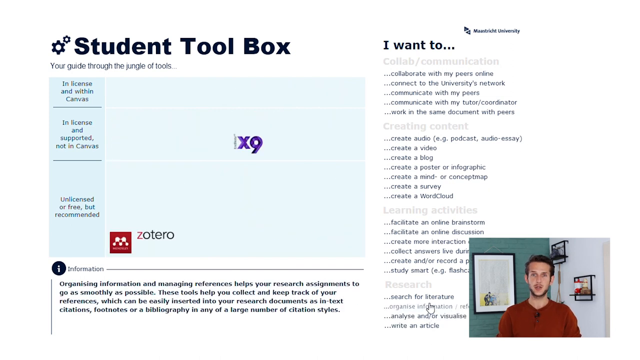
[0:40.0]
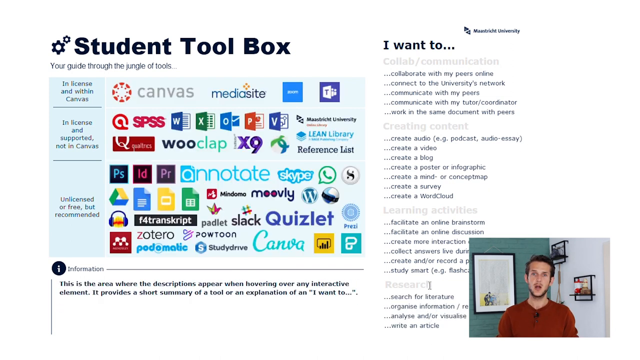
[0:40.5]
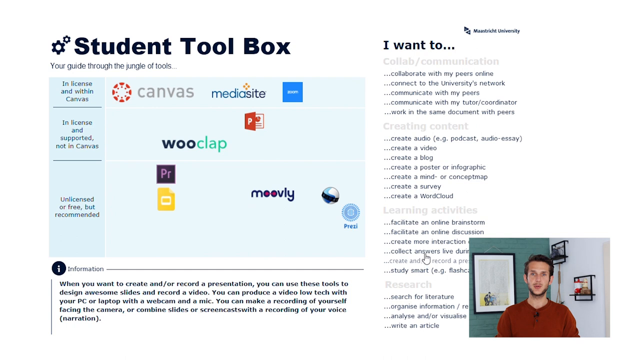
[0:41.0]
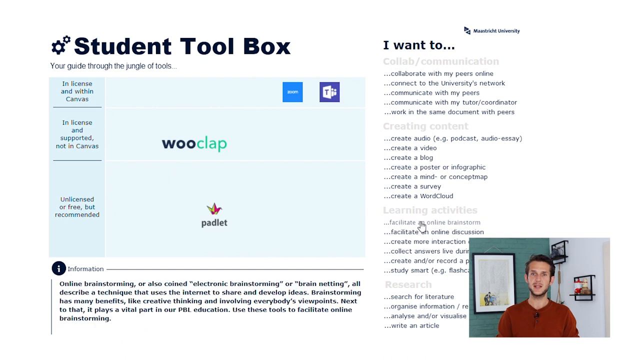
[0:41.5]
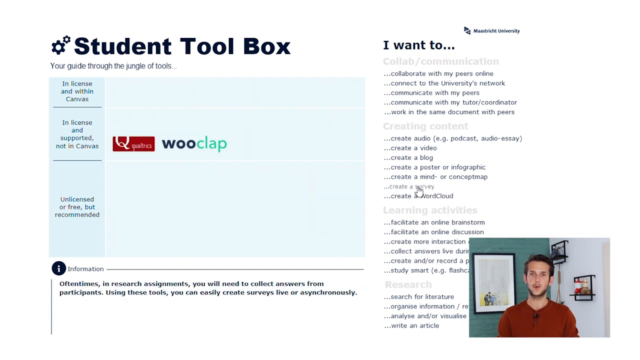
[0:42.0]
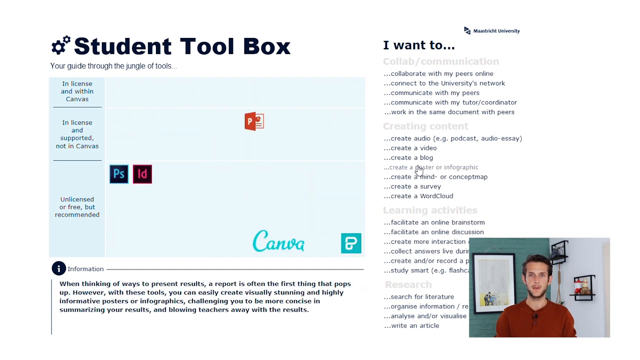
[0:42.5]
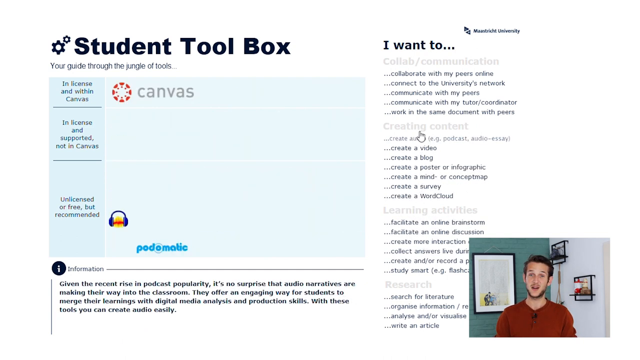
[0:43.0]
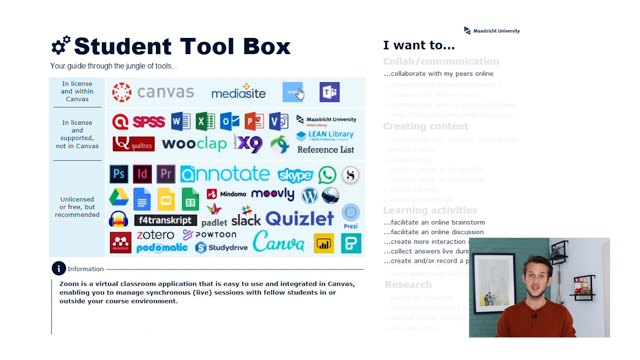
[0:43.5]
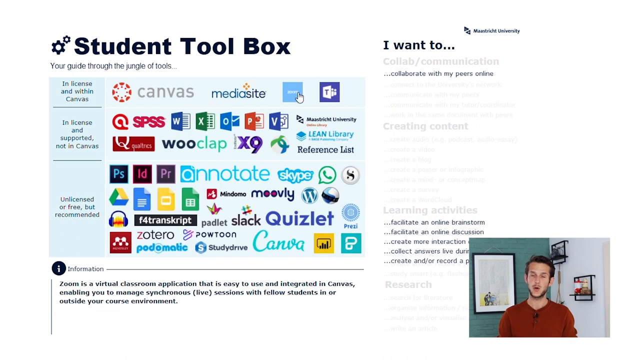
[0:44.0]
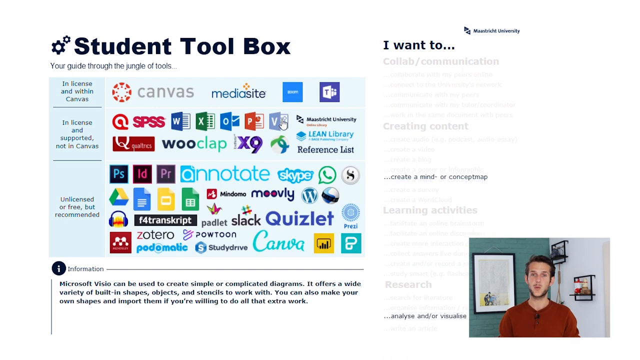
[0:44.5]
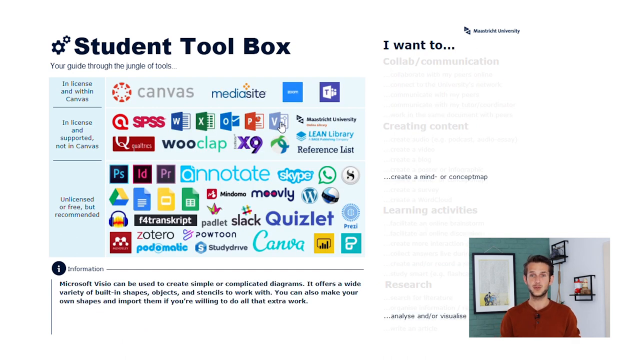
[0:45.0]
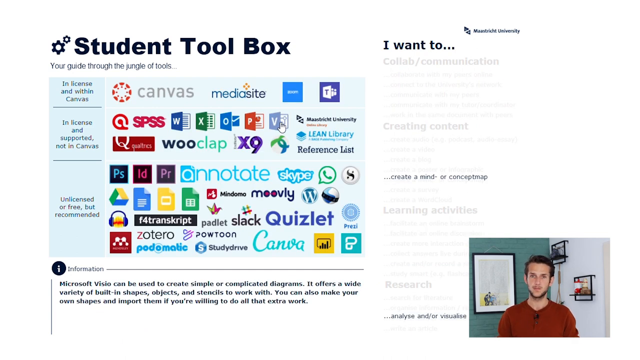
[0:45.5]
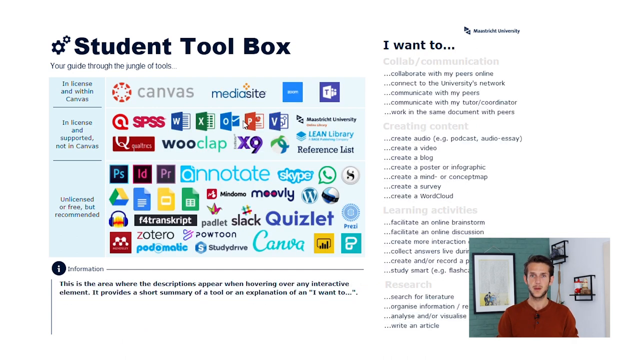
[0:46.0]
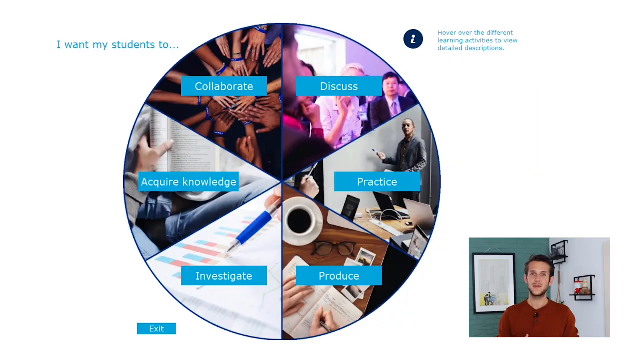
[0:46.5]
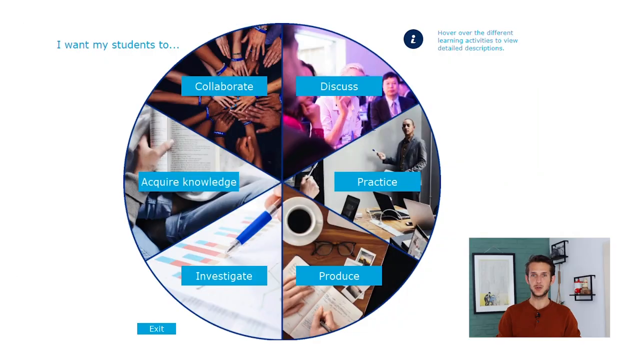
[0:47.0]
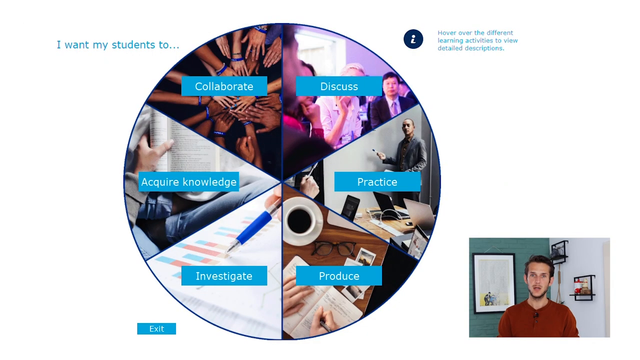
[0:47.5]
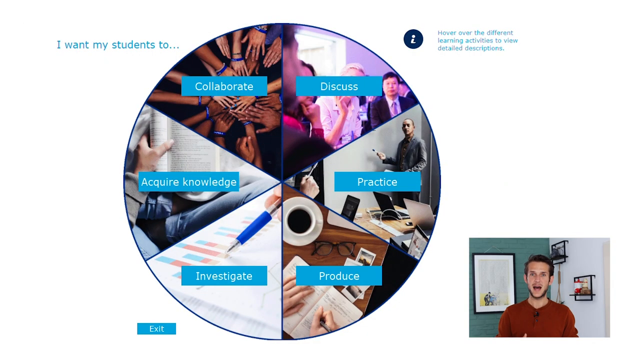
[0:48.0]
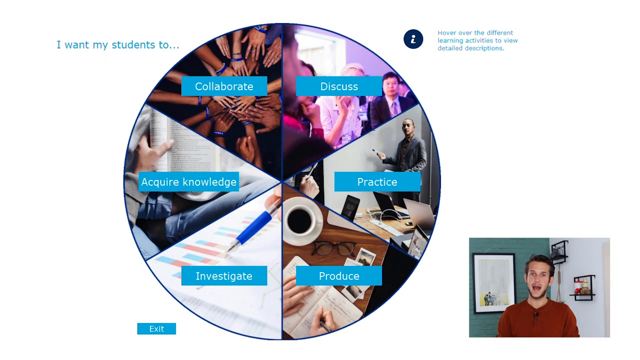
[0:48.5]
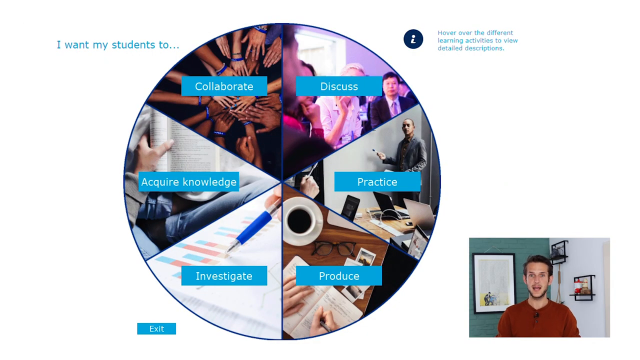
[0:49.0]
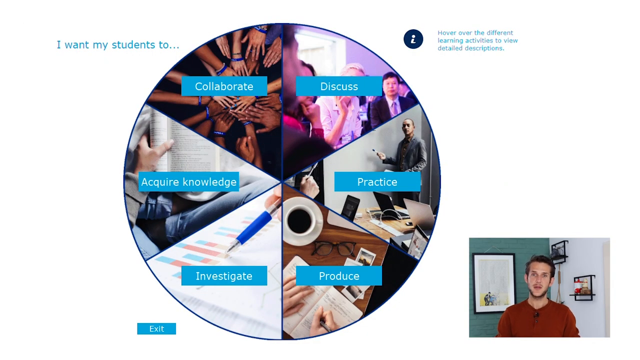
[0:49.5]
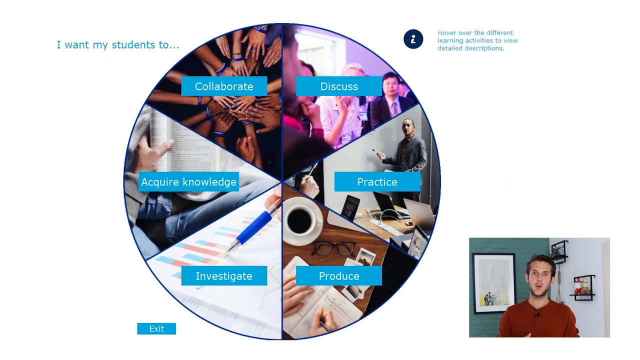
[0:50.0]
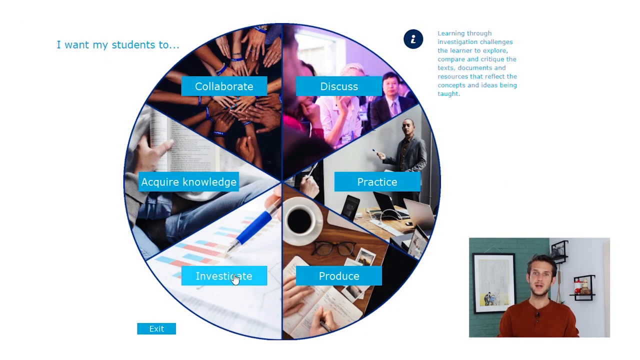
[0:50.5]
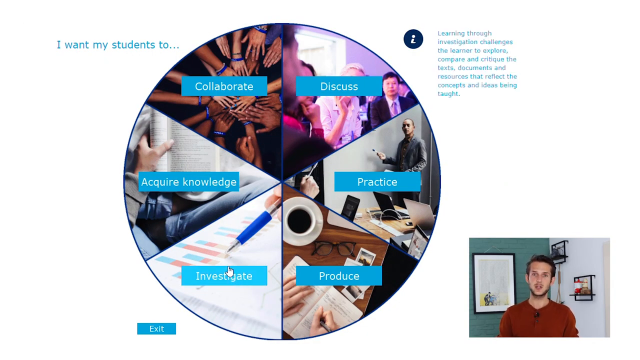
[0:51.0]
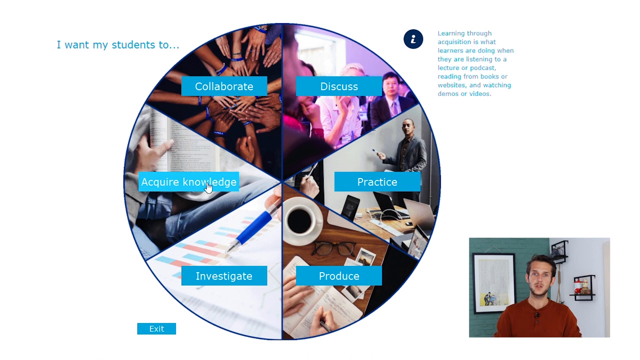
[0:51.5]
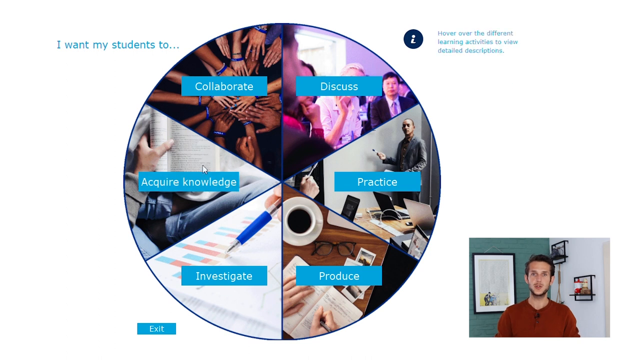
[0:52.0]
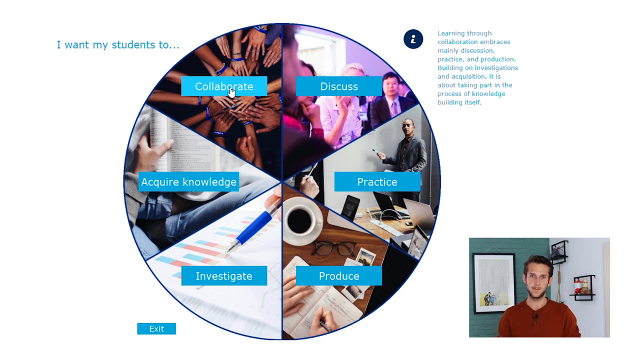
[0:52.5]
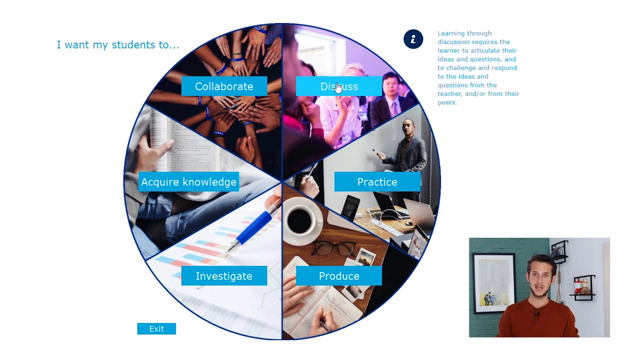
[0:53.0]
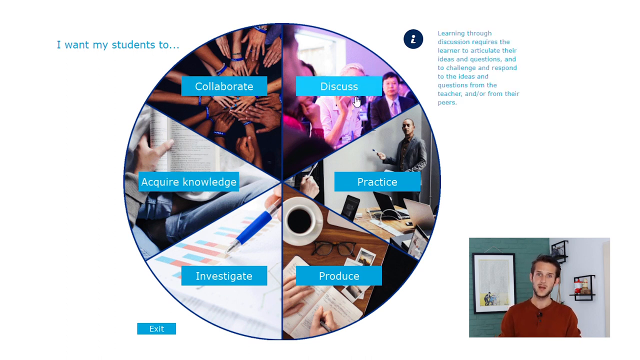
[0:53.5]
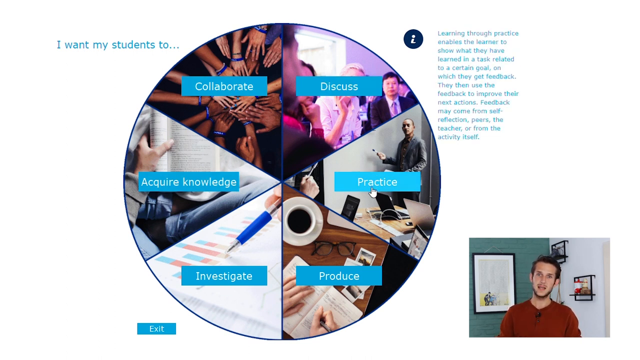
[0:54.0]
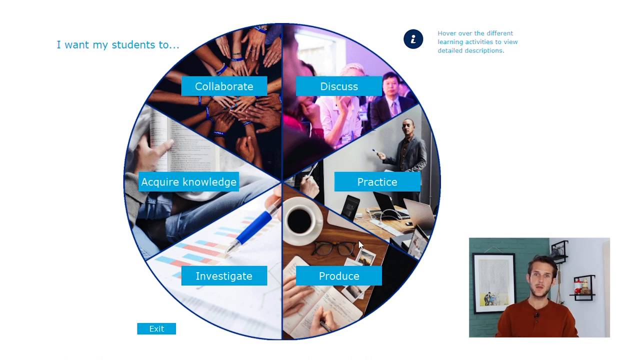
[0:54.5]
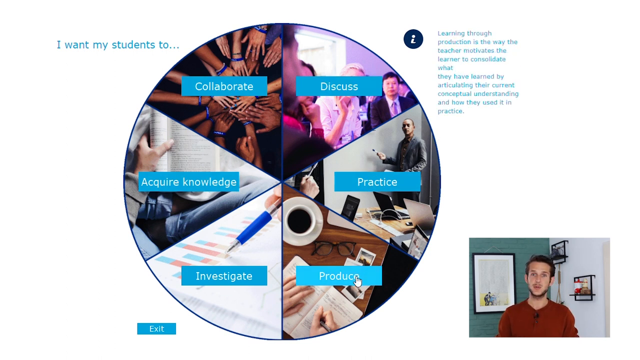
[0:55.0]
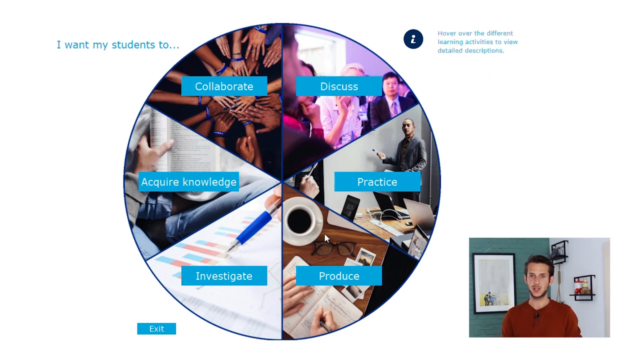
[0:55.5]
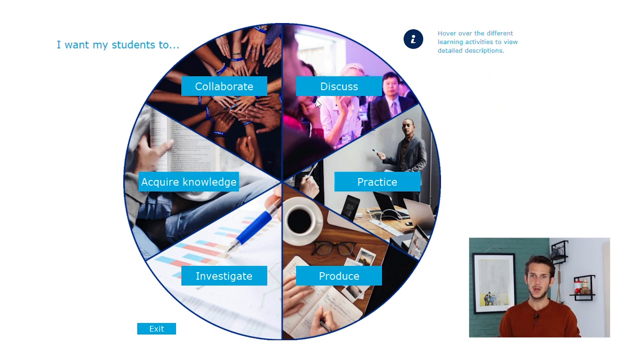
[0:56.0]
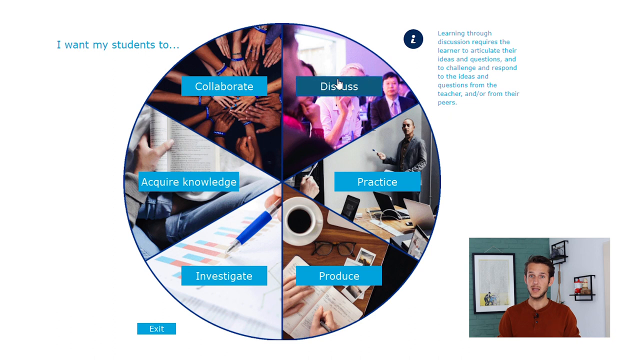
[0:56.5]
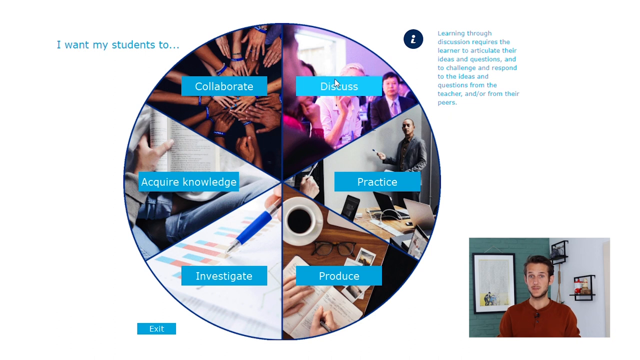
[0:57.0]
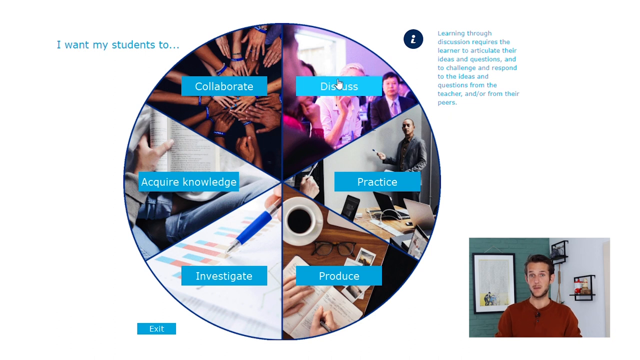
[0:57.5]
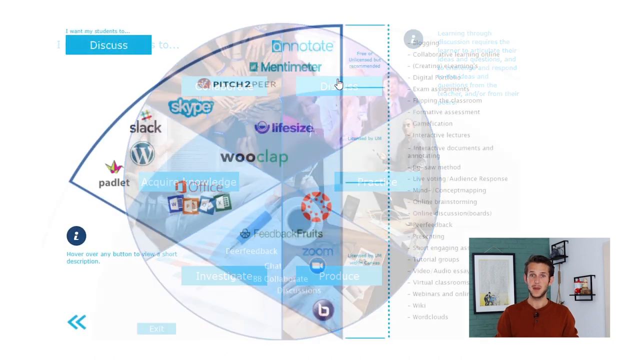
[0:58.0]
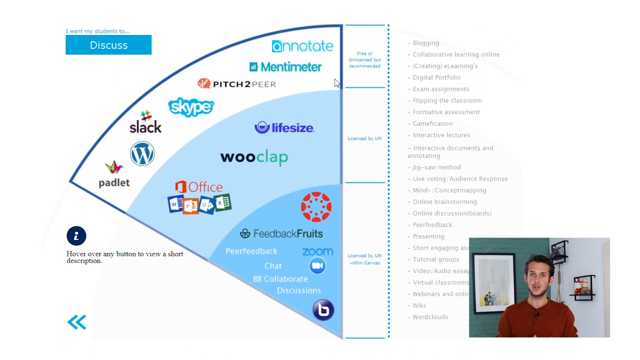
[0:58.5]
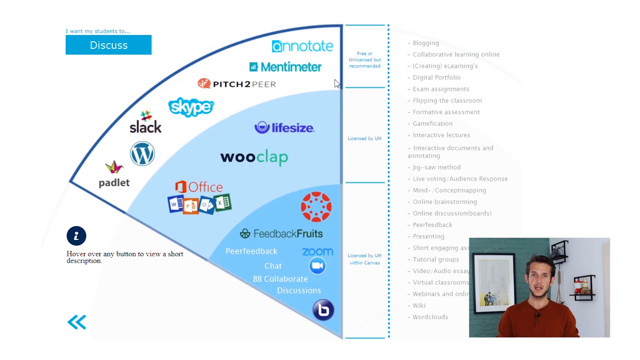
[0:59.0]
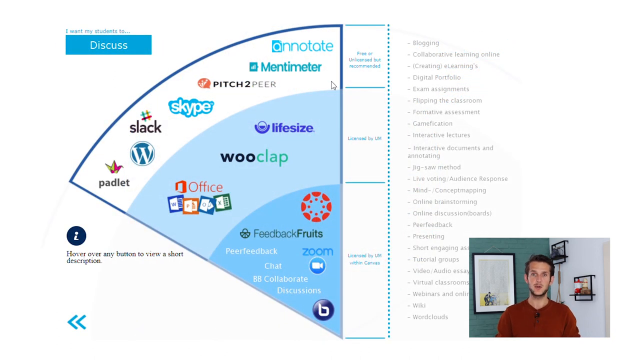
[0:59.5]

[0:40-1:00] In the screen recording, the cursor hovers over the "I want to" section, on the research category, and a few icons appear. For writing an article, Google Doc, Word document and another tool by Adobe show up. For creating multi-interaction, Zoom, Microsoft Teams, WooClap and Padlet appear. For creating a video, Canvas, Mediasite, PR, Movely and Powtoon appear. The cursor then hovers over Zoom, and the information area shows a short description of what it is; it also hovers over Microsoft Visio. Meanwhile the "I want to" section dynamically highlights which goal best suits that app. The next shot shows a selectable pie chart of some sort. Next to it, text reads "I want my students to...", with six options to hover over or choose for different learning activities: collaborate, discuss, practice, produce, investigate, and acquire knowledge. When investigate is hovered over, the information area at the top right of the circle updates with a description. The cursor also hovers over acquire knowledge, collaborate, discuss, practice and produce, then hovers over discuss again and clicks it. A new page opens, and at the top right, under "I want my students to", a rectangle now shows "discuss".